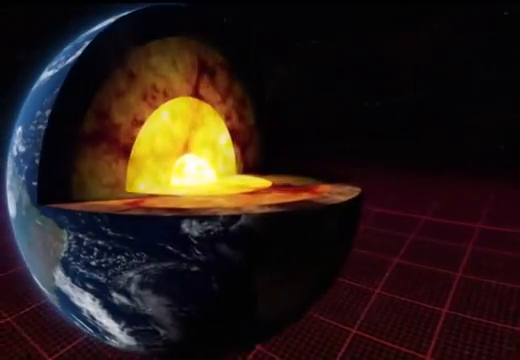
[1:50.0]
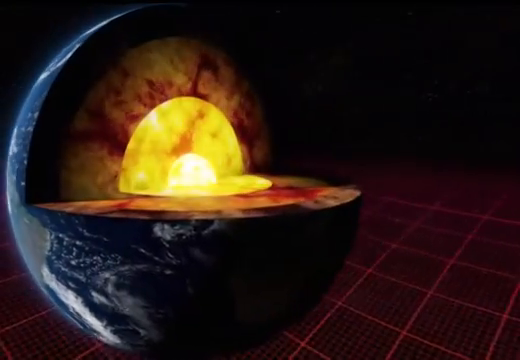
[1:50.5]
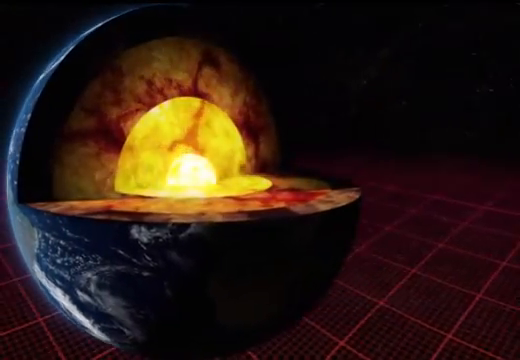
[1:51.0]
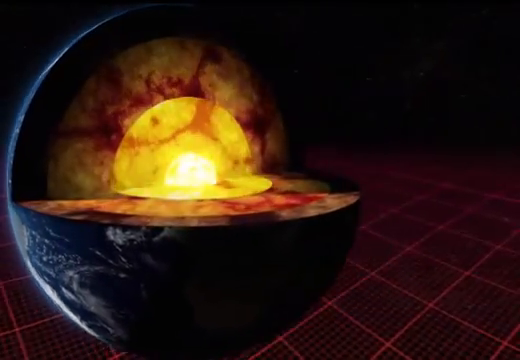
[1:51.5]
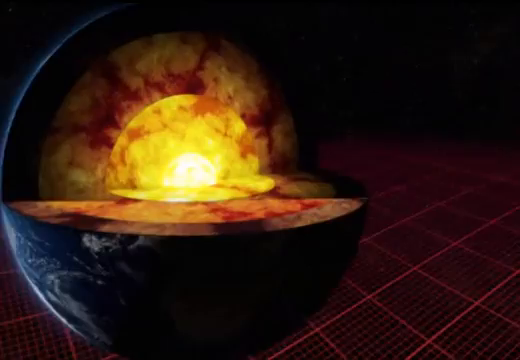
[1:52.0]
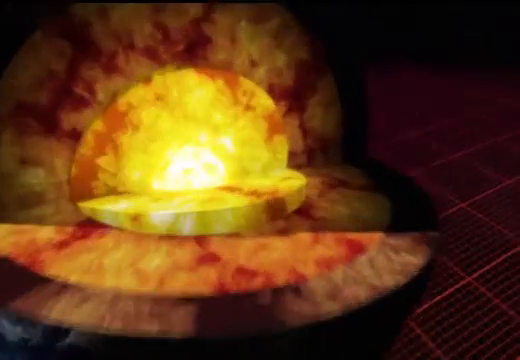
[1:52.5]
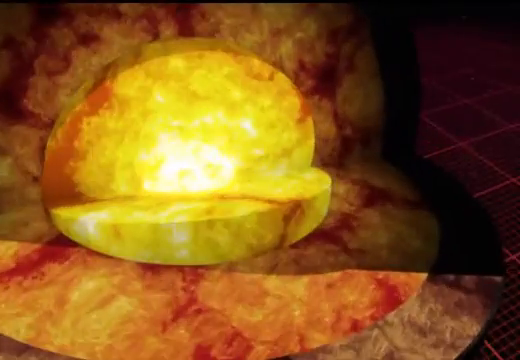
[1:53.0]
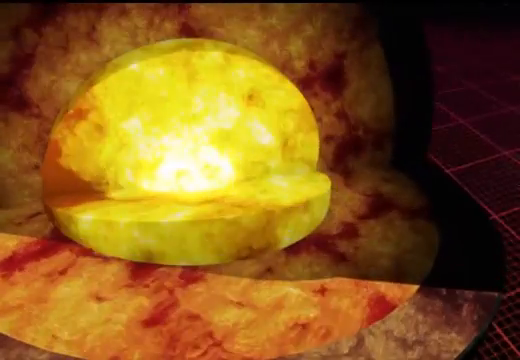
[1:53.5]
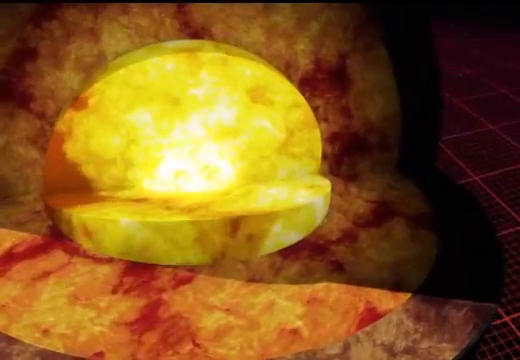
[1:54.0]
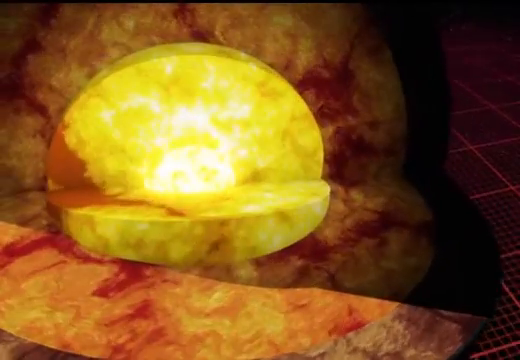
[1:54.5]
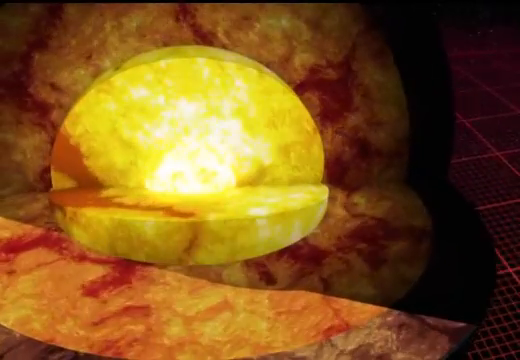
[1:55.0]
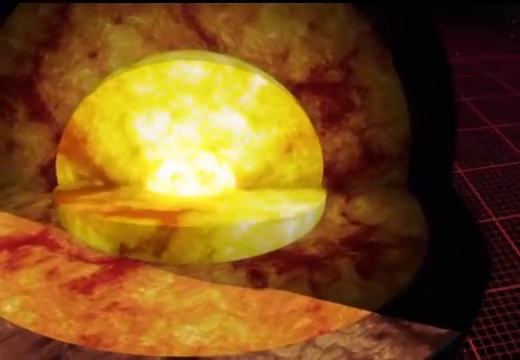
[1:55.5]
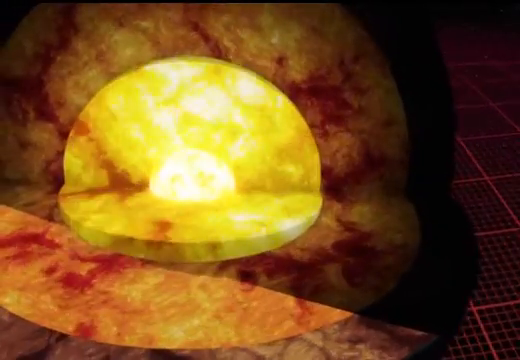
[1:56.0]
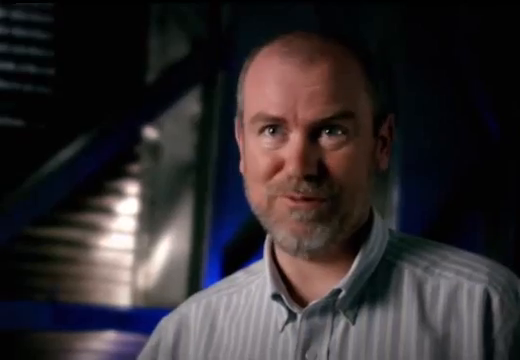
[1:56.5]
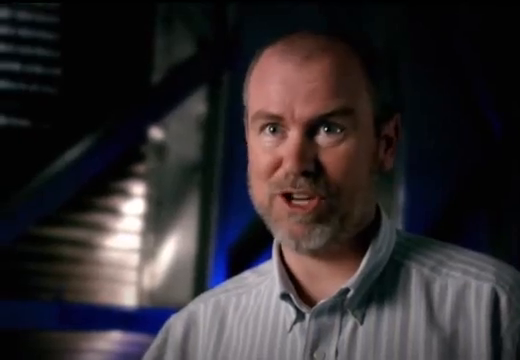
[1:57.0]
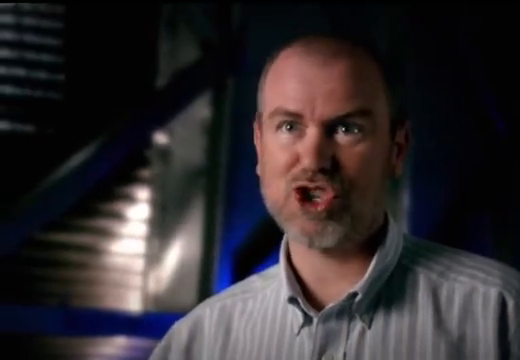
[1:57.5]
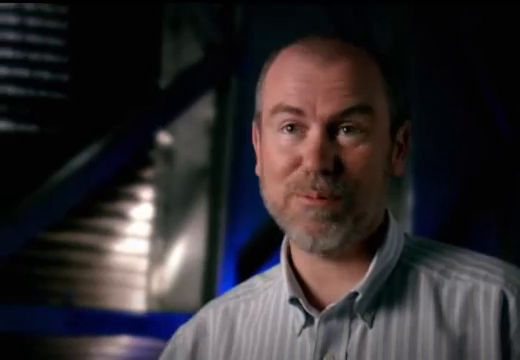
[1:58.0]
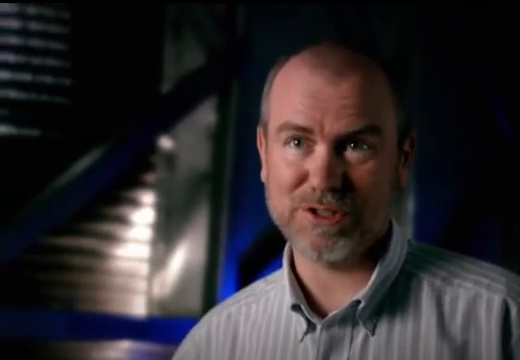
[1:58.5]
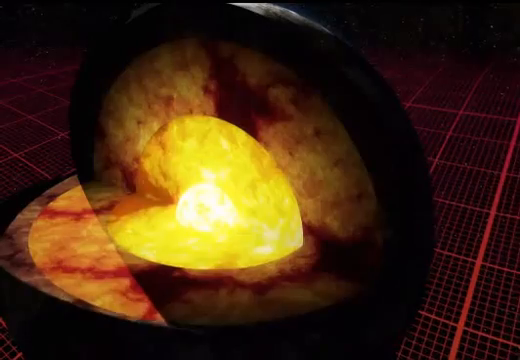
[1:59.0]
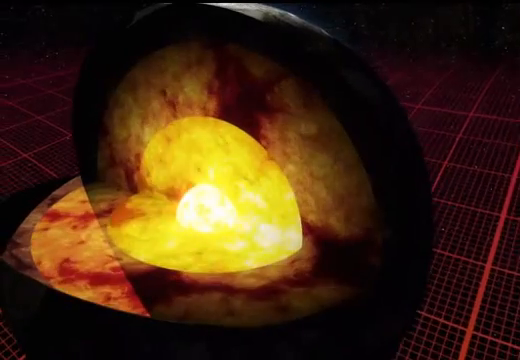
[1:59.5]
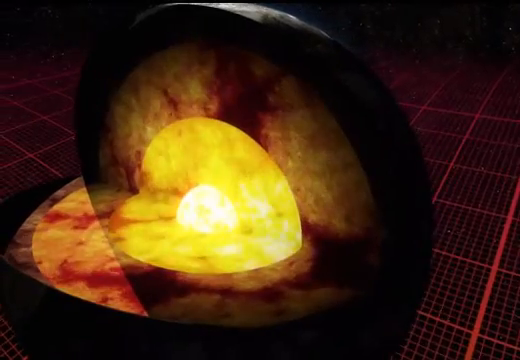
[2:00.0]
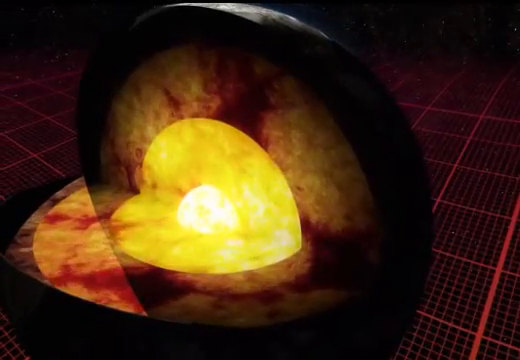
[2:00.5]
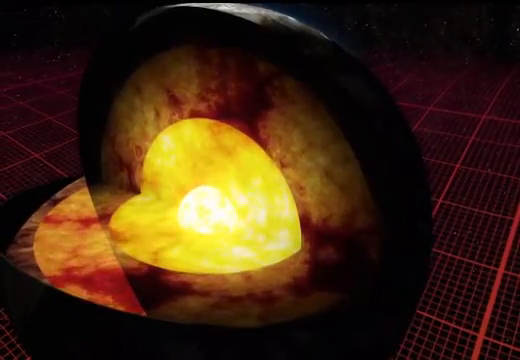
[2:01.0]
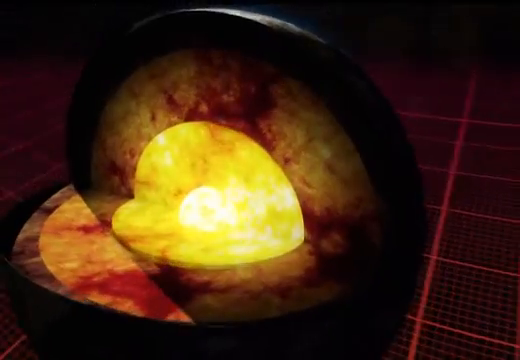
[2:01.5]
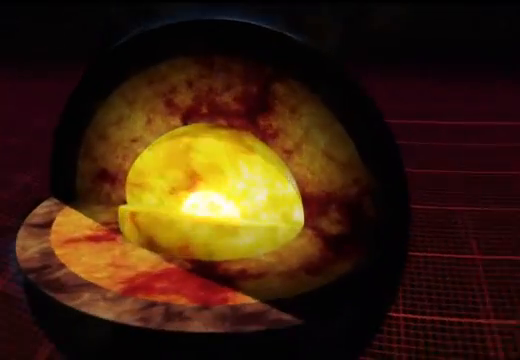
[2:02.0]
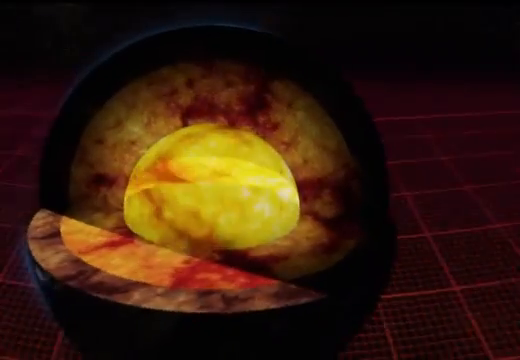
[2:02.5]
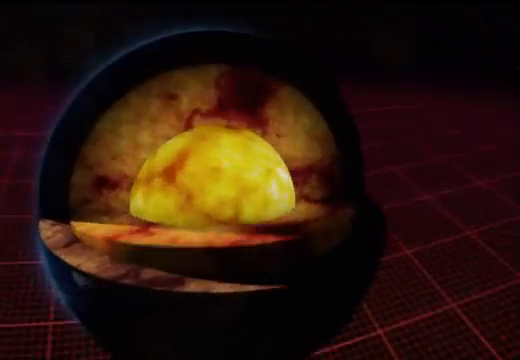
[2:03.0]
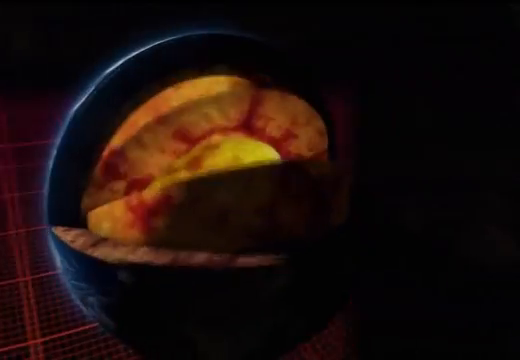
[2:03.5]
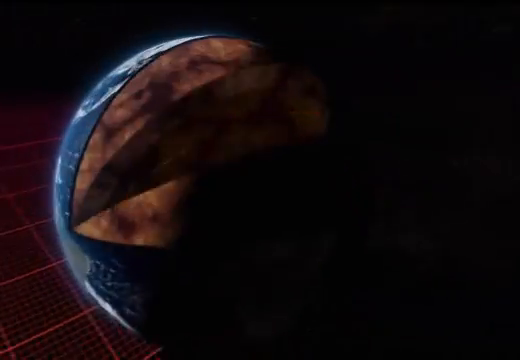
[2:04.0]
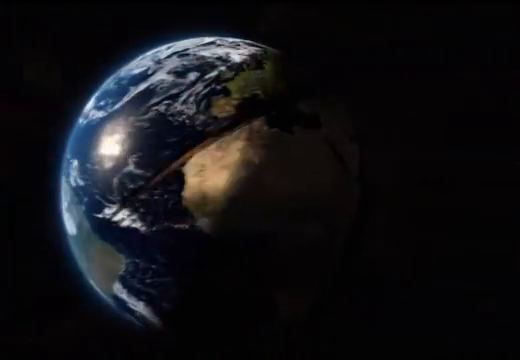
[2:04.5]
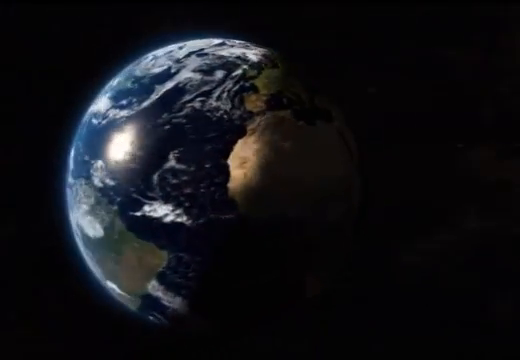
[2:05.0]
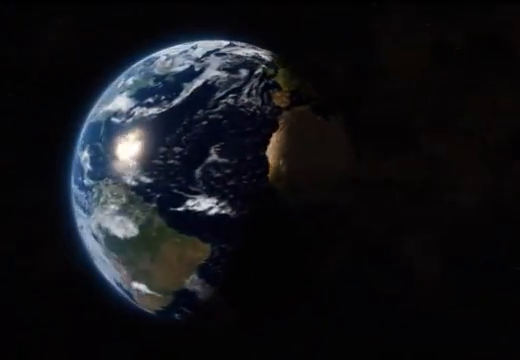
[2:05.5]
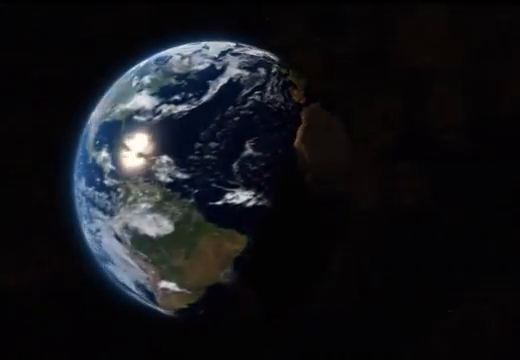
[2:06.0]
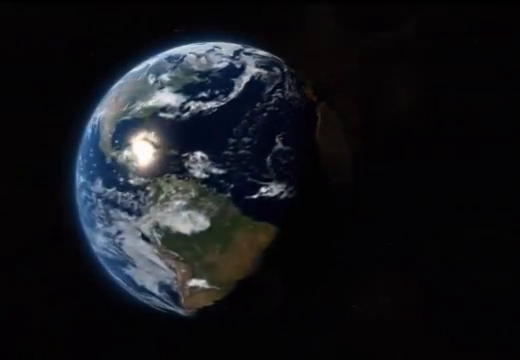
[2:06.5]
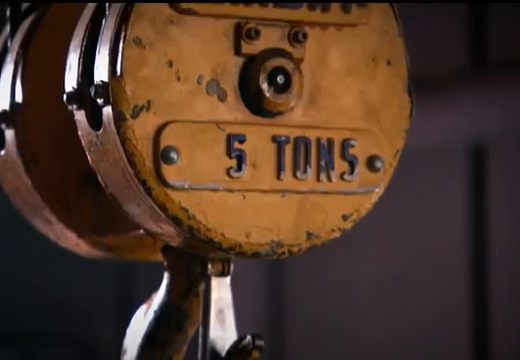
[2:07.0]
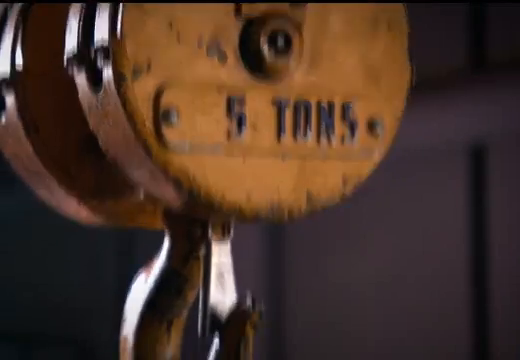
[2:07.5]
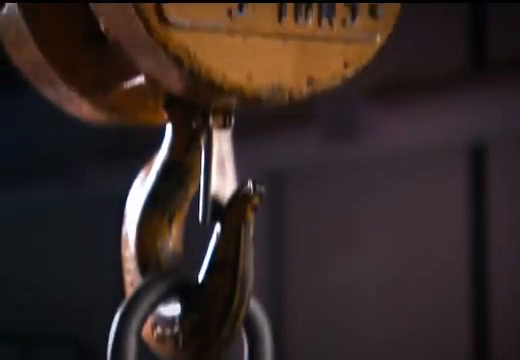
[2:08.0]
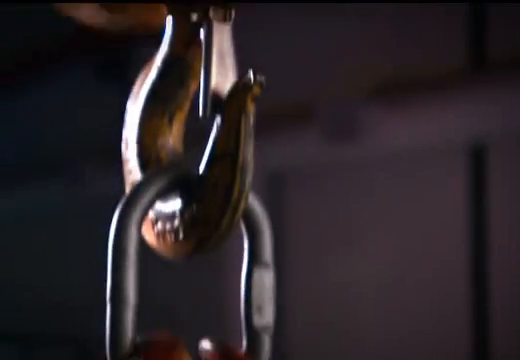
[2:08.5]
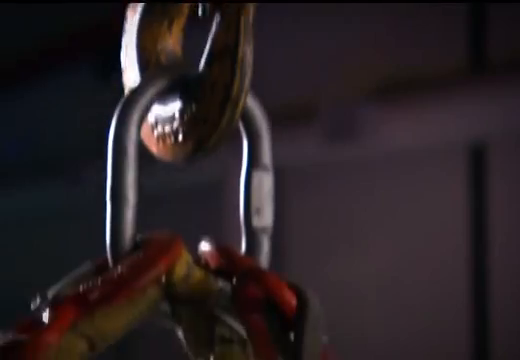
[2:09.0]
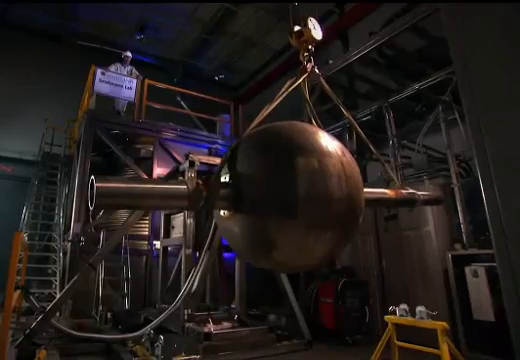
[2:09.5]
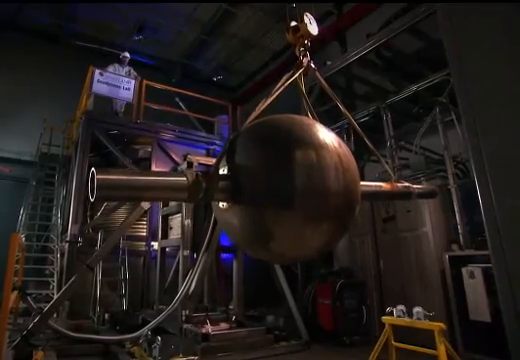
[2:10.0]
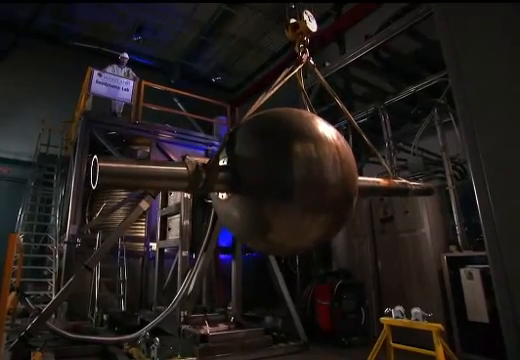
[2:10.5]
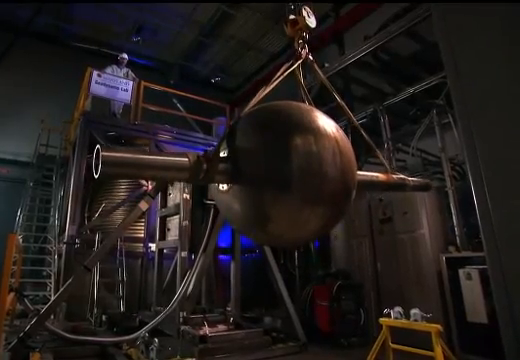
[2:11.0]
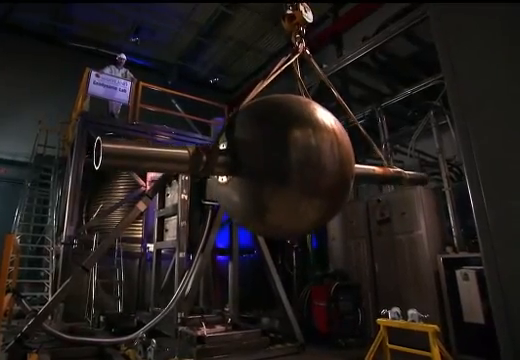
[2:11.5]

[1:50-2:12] The core of planet Earth, in black, orange and yellow, is shown with a flashing yellow light inside it from which several flashing and flare animations emit. The view moves to the white Caucasian man shown earlier in the white and gray striped collared shirt, who continues to speak. A different angle of the Earth's core follows, and then the entire planet is shown as it closes. Next, orange machinery appears with the words "five tons" in black next to it; it carries a very big, round, bronze-colored object with two very big rods on its side. Several other machines and pipes are in the background of the room. In the upper left-hand corner, a man wearing a hard helmet stands up top and looks to be operating the machinery.